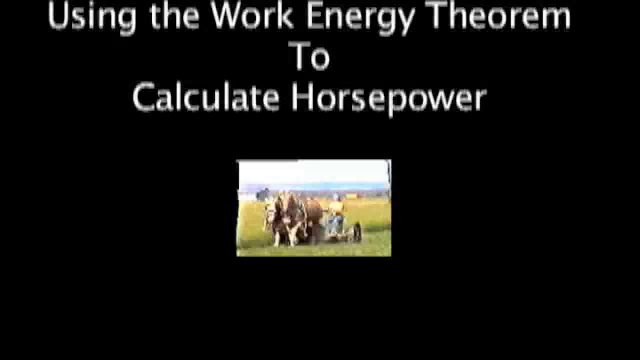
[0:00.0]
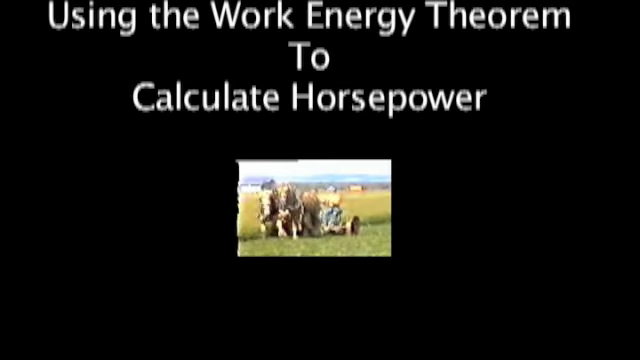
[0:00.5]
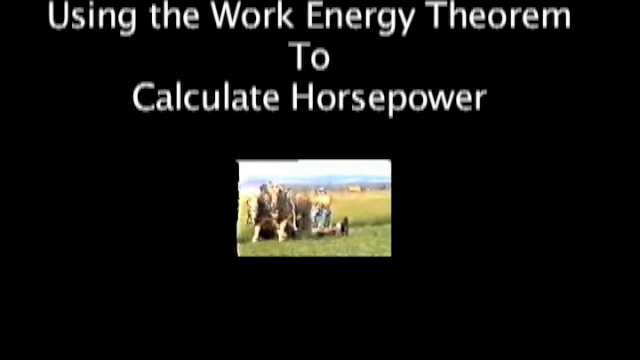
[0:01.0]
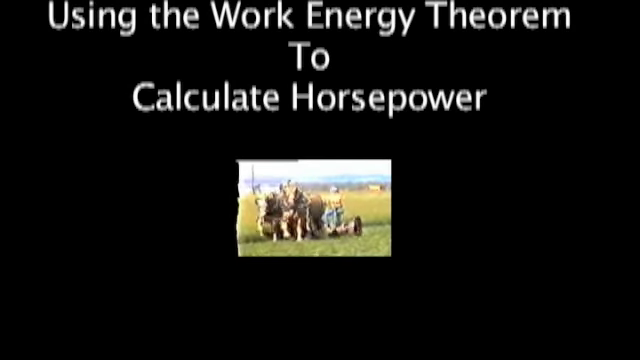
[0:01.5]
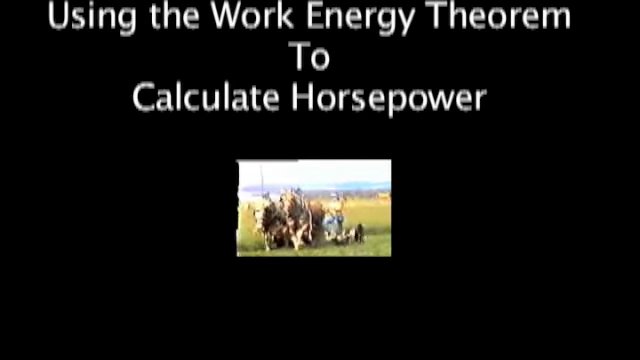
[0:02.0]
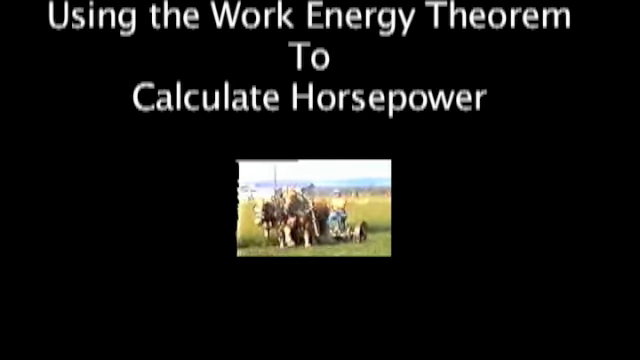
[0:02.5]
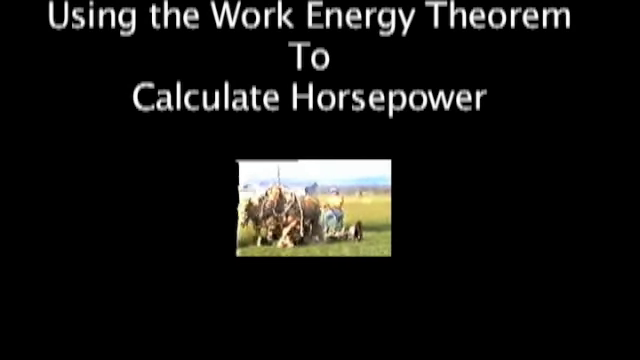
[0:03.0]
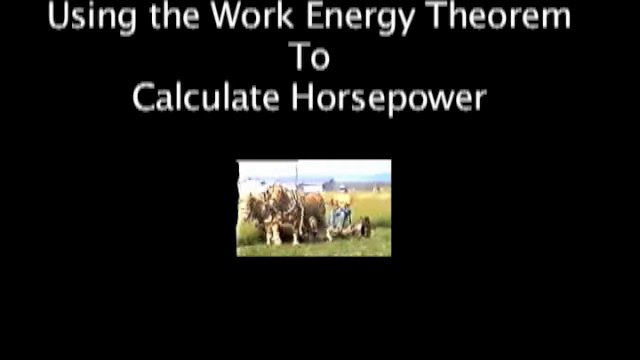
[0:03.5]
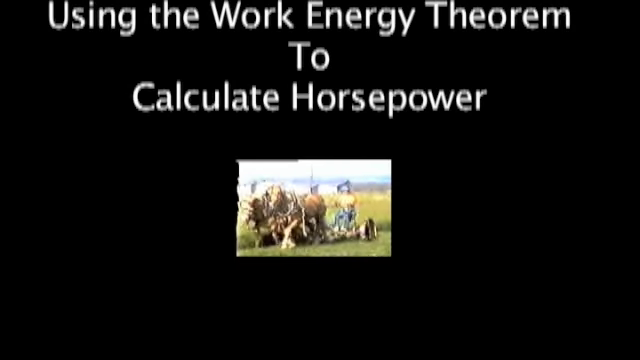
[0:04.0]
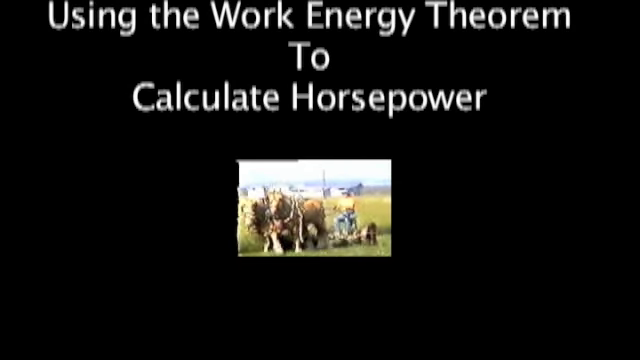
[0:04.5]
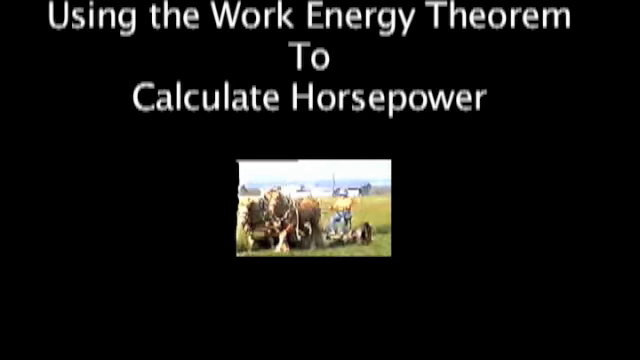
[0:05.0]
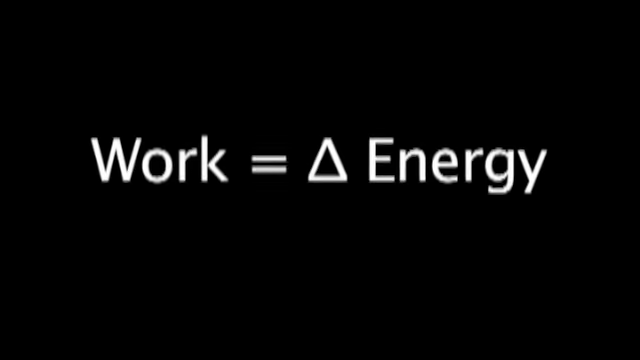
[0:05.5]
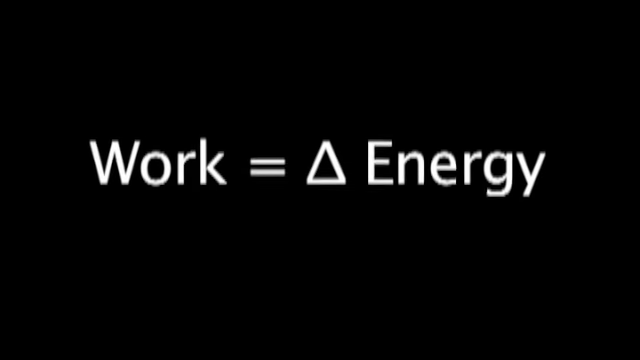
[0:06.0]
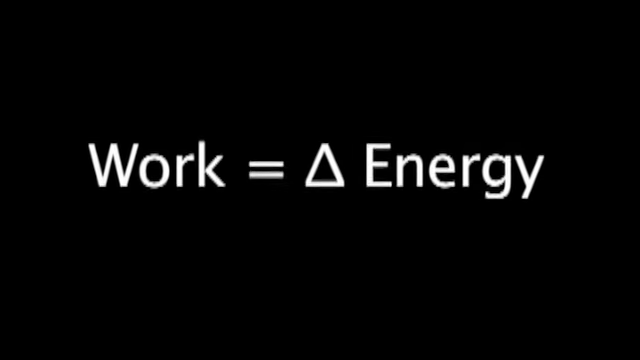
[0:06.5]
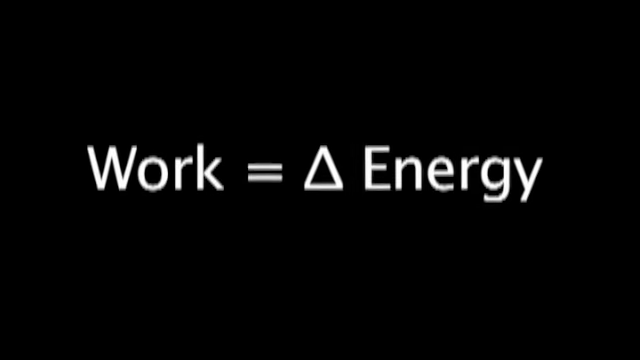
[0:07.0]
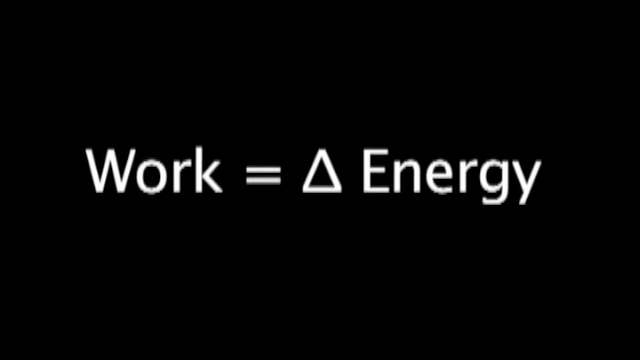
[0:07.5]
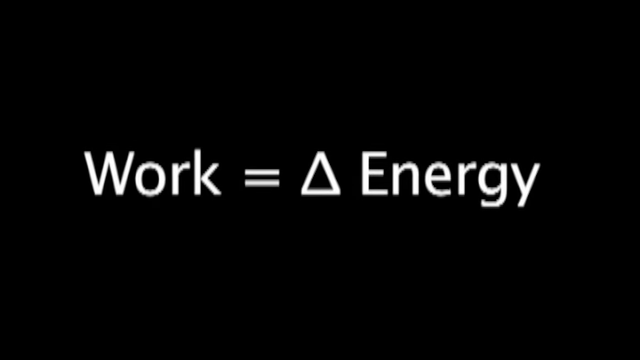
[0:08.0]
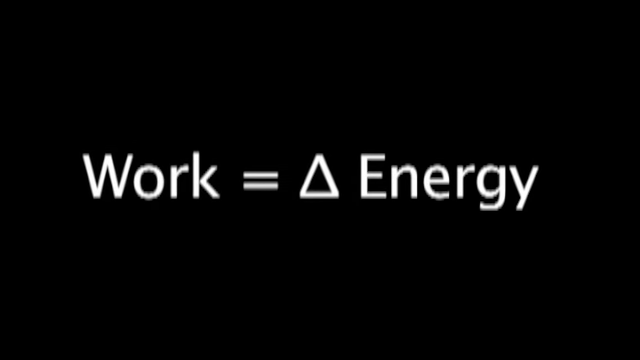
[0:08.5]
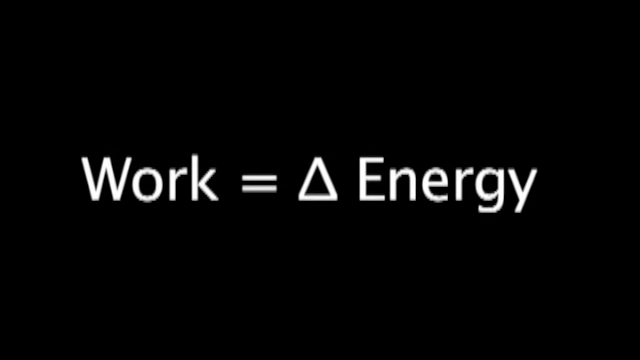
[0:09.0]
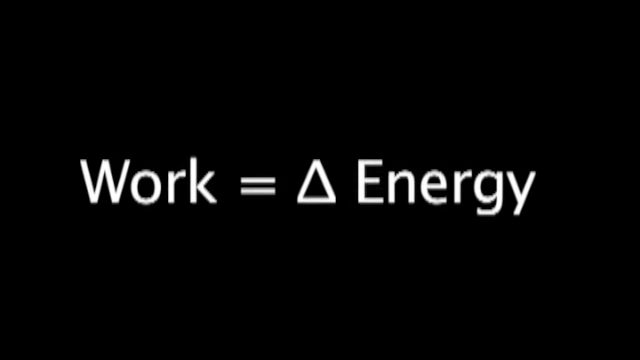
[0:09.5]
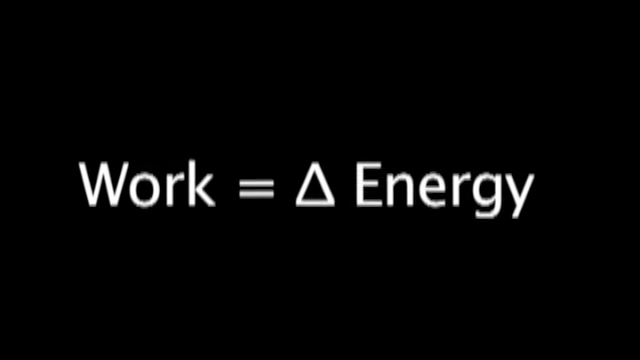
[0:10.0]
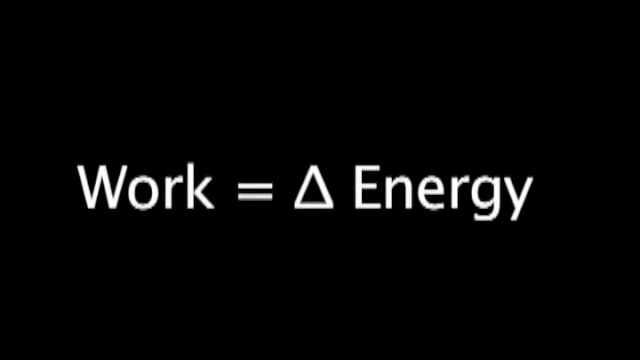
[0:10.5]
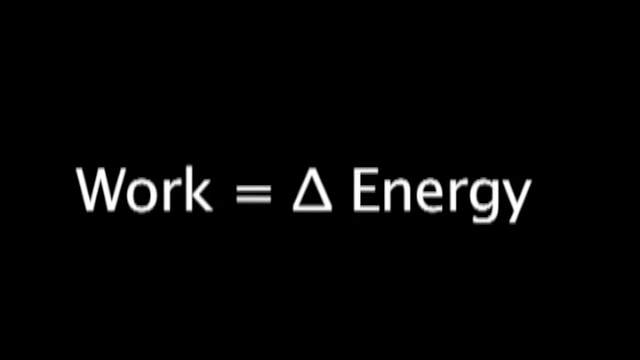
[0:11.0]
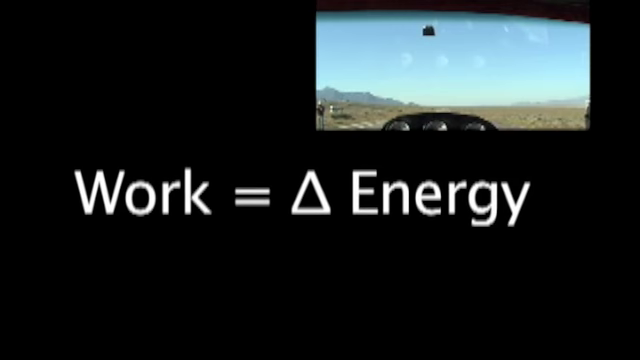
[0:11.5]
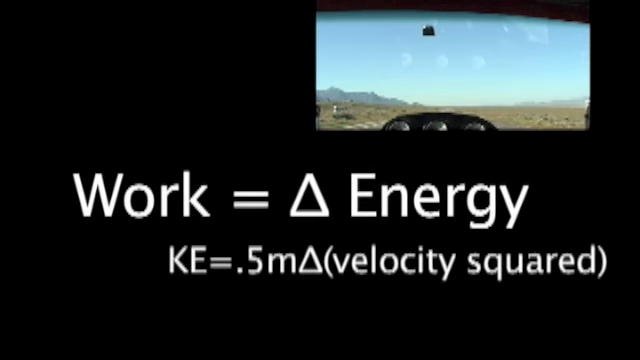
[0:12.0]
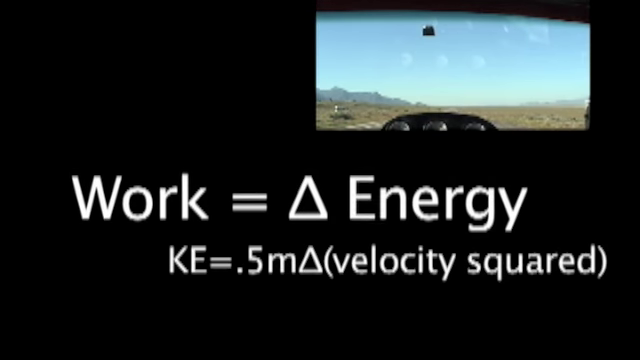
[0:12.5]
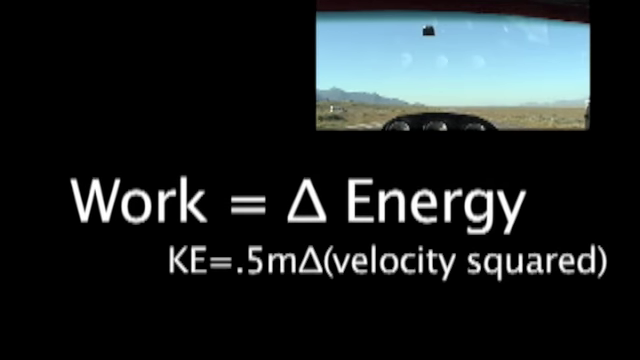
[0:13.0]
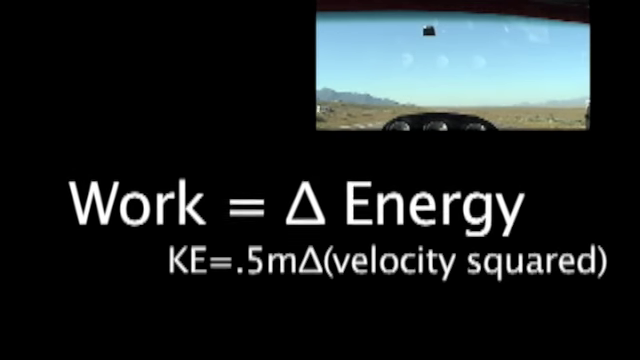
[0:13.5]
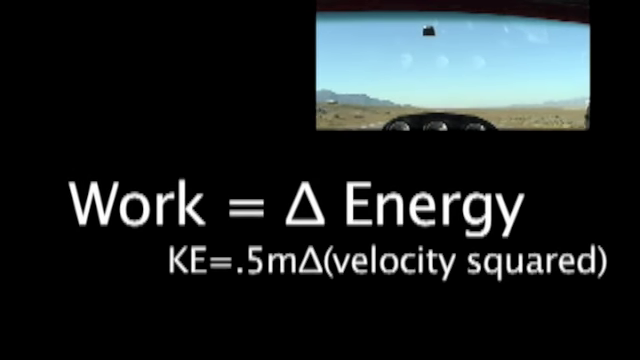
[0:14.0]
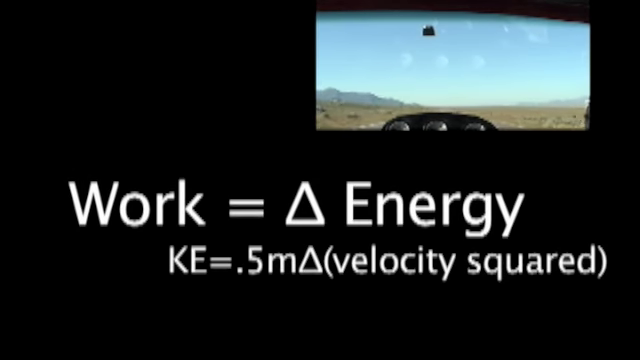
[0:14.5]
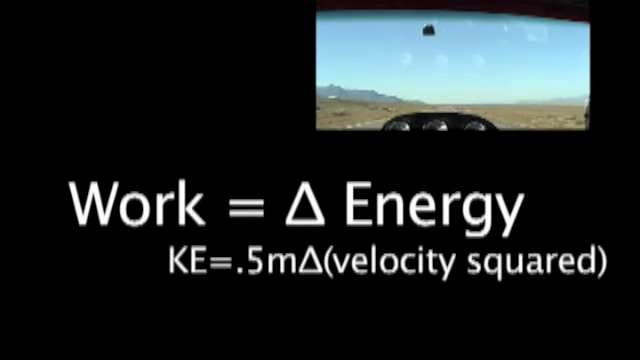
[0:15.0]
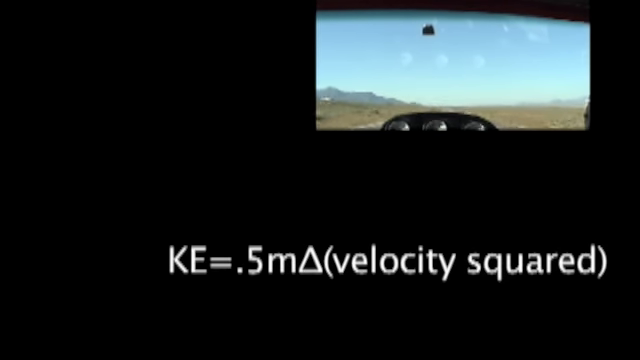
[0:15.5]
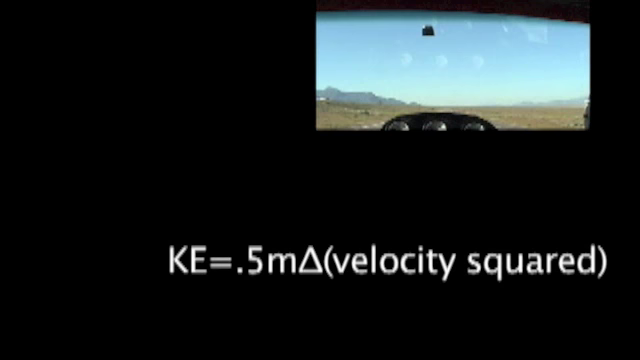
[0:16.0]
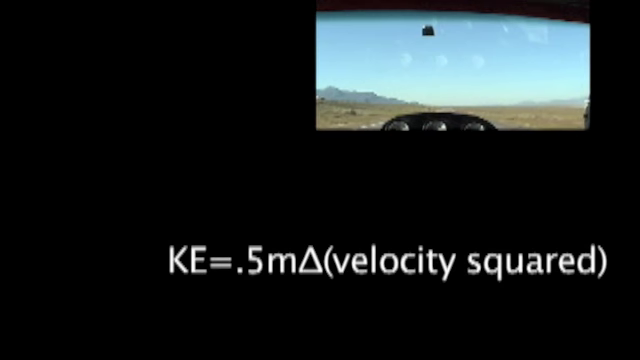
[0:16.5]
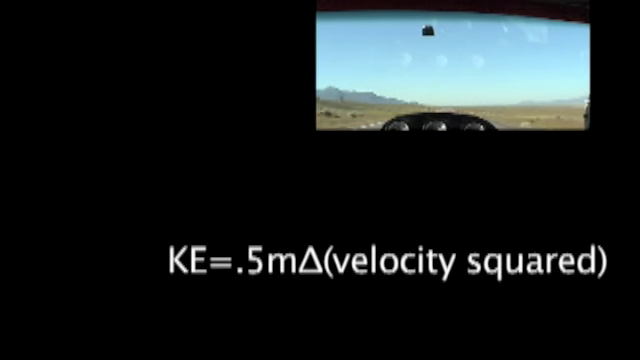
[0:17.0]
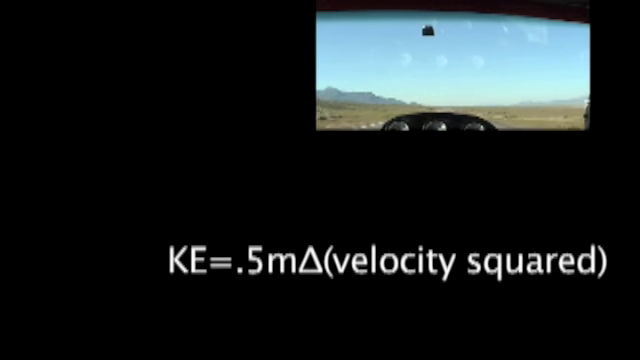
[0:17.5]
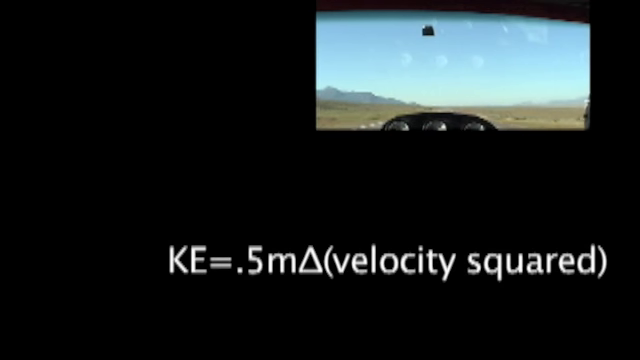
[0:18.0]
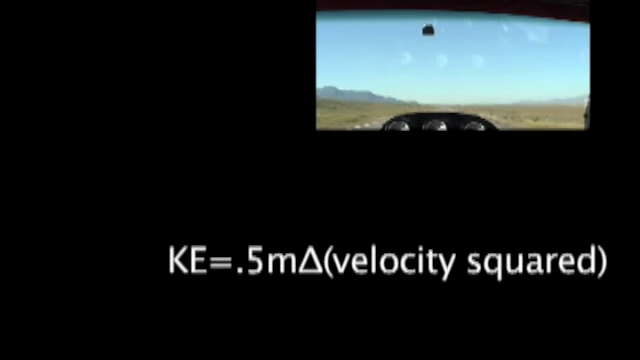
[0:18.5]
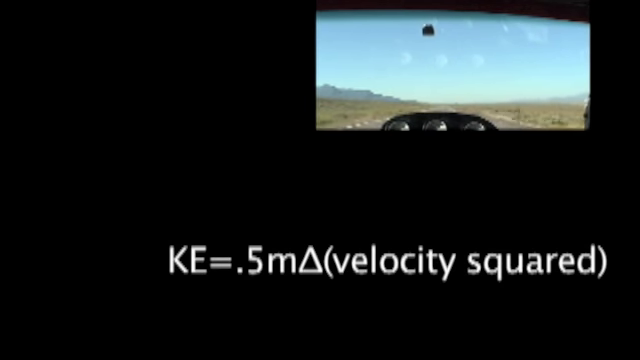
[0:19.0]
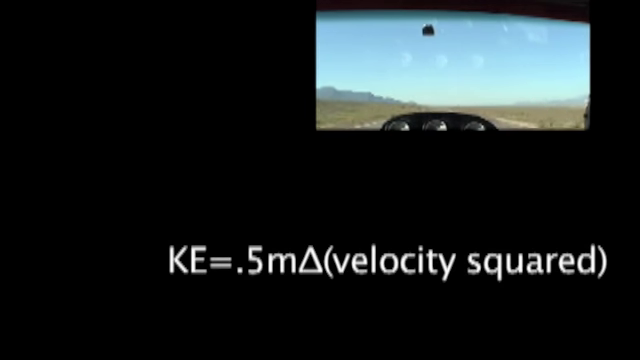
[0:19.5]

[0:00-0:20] The scene opens on a black background. At the top, white text reads "using the work energy theorem to calculate horsepower." In the center of the screen, very small and very blurry, is what appears to be two horses carrying a carriage with a person in a yellow shirt. The screen then switches to another black screen with white text reading "work =", followed by an image of a triangle and the word "energy." This floats around the screen briefly, and then what looks like a video pops up in the top right. Below the "work =" triangle "energy" line, smaller white text reads "KE = 0.5m", a triangle, and "(velocity squared)". The video appears to show something driving through an empty, deserted field. The weather looks sunny, and the surroundings look dry.